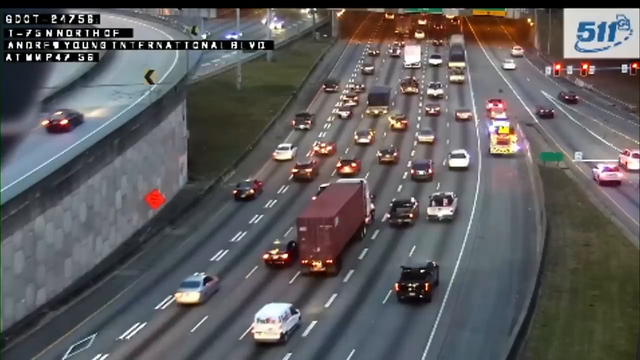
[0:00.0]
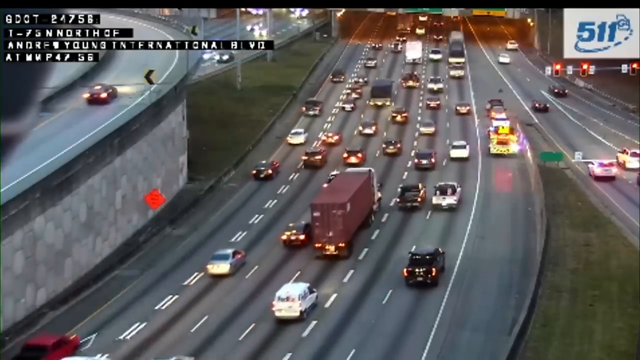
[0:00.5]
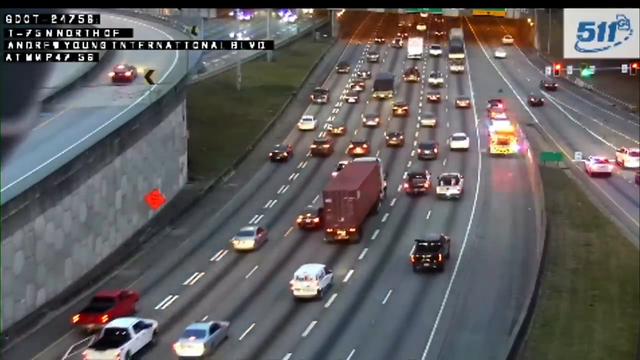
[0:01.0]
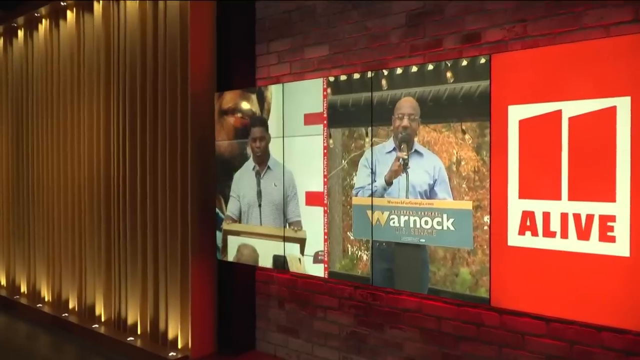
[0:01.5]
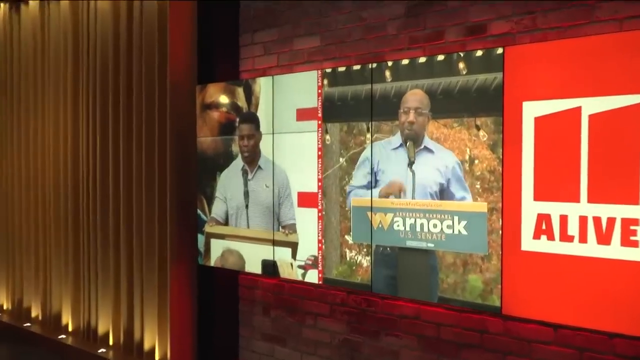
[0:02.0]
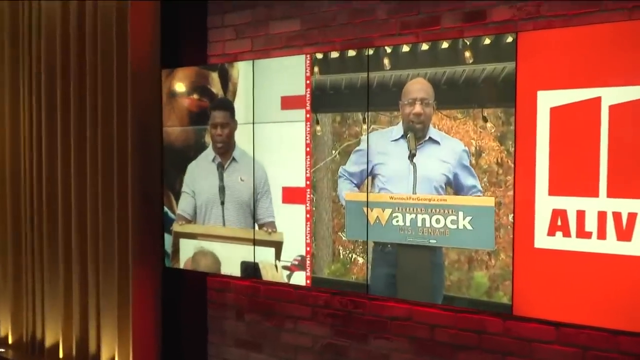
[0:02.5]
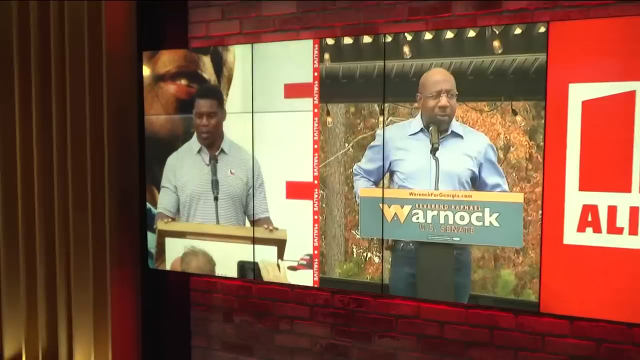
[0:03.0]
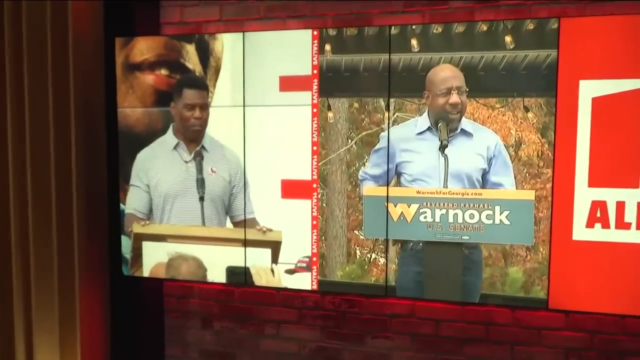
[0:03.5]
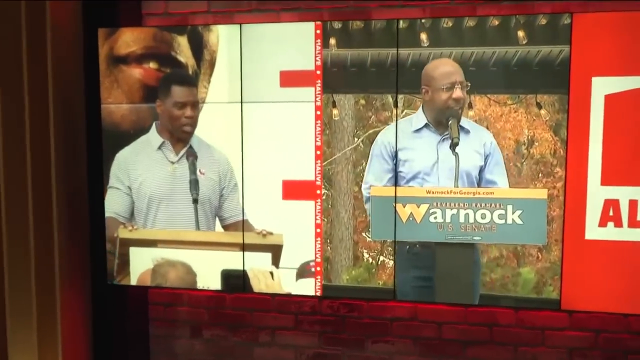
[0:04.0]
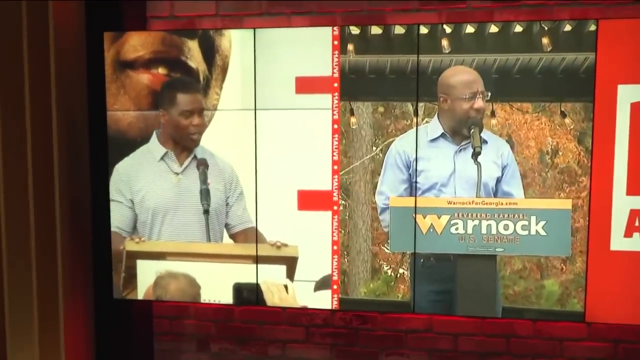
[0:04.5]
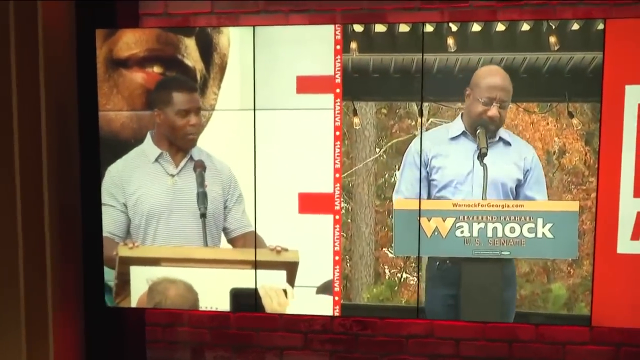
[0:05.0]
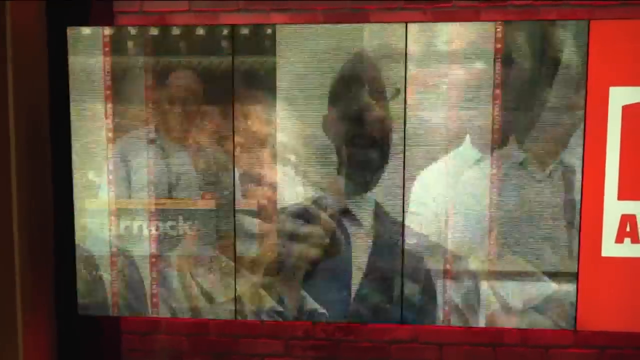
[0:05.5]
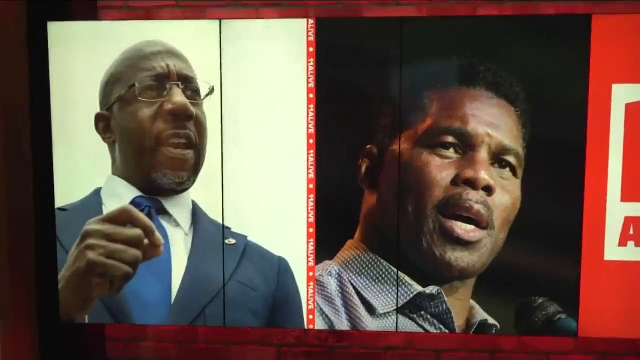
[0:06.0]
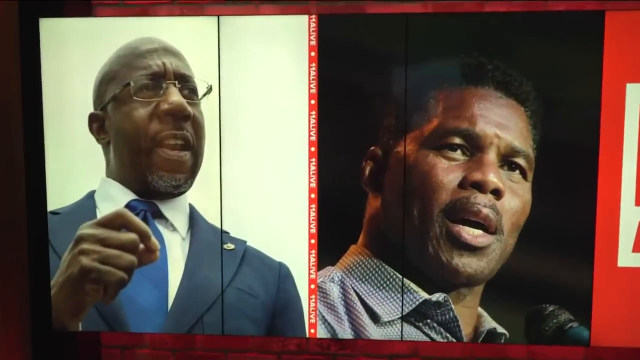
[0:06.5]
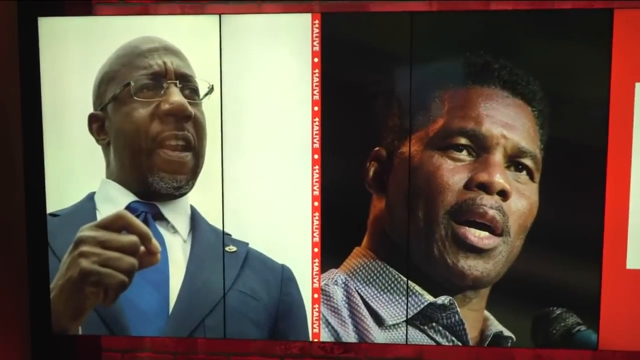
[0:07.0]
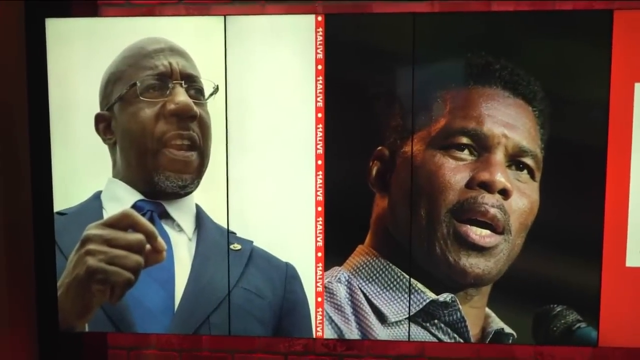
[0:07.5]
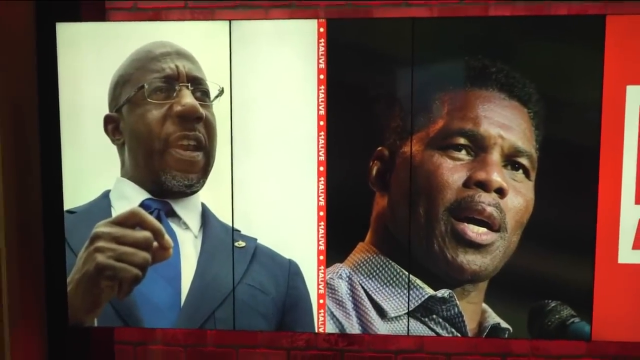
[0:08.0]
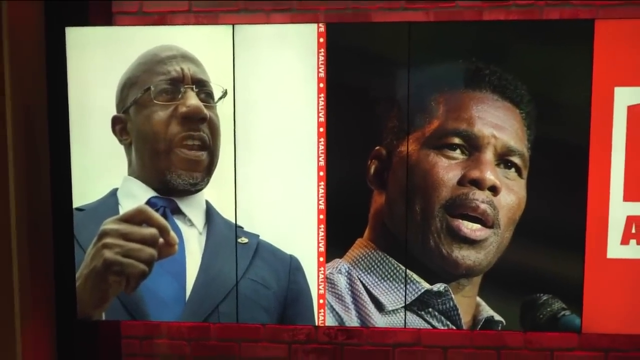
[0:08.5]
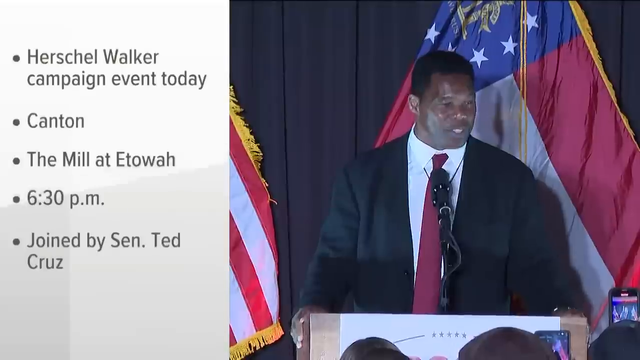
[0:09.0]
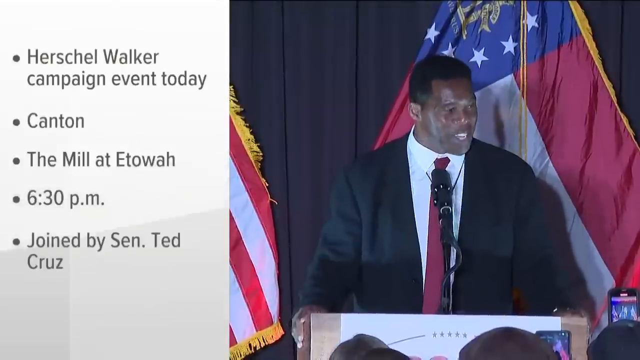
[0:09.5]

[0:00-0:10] The footage concerns a political campaign between two candidates, apparently Warnock, a Democrat, and Herschel Walker, a Republican; both are African American. A split screen shows the two candidates, and the footage is from Channel 11; there is another split screen of both candidates as well. Before that news segment comes a traffic section from a highway camera, with a 501 logo in the top right corner and a line of text, showing a highway that merges into a multi-lane highway.